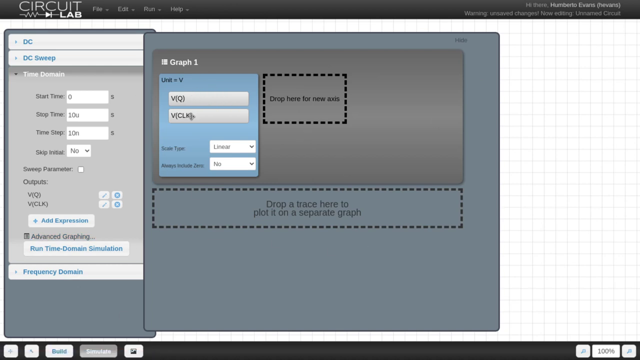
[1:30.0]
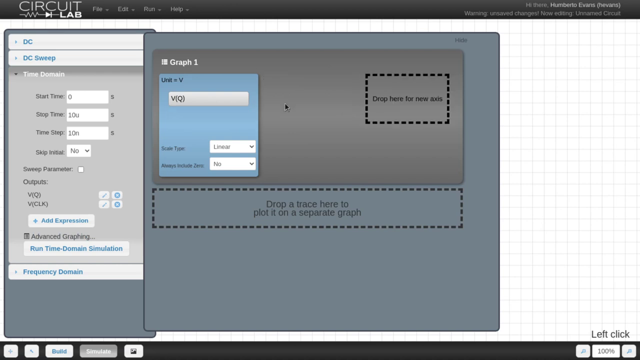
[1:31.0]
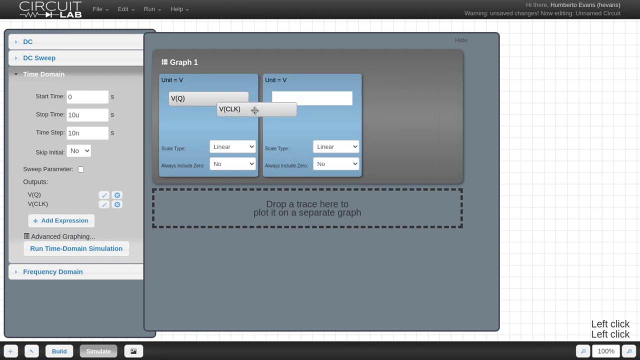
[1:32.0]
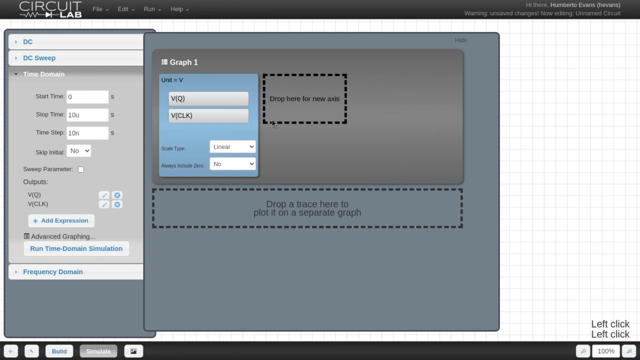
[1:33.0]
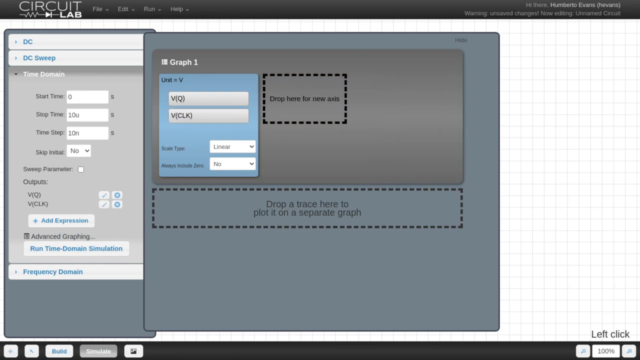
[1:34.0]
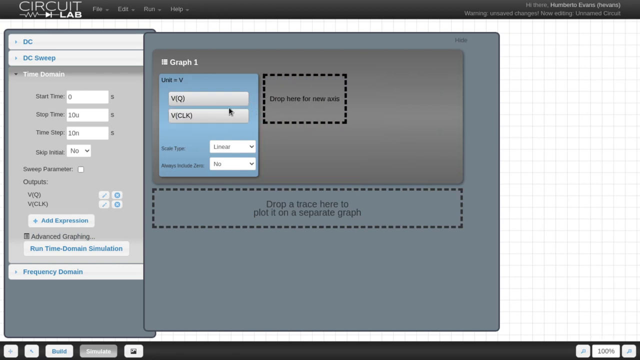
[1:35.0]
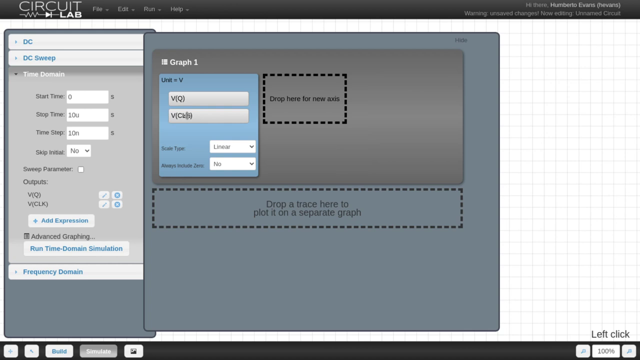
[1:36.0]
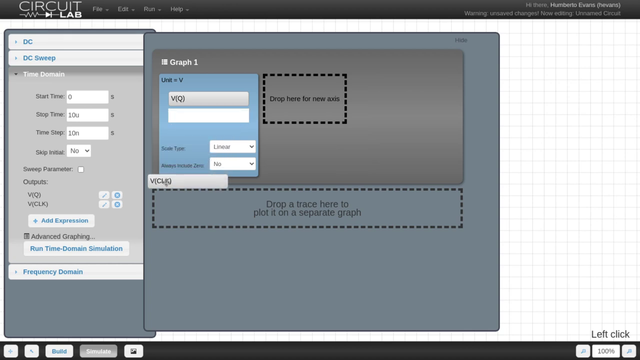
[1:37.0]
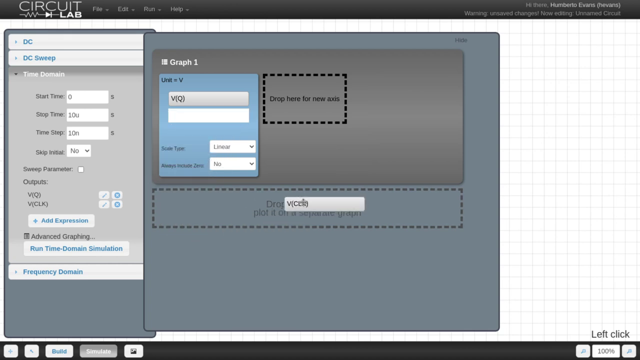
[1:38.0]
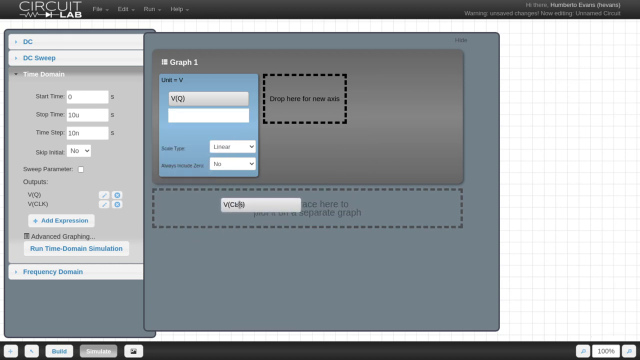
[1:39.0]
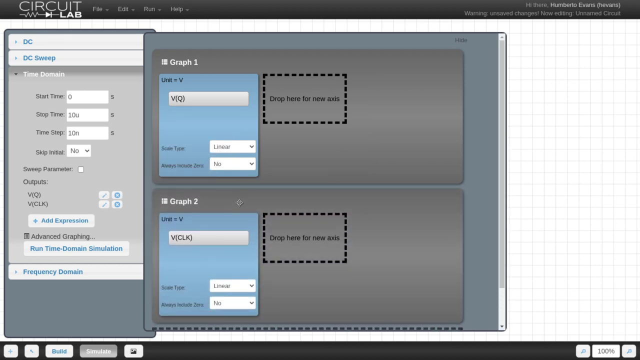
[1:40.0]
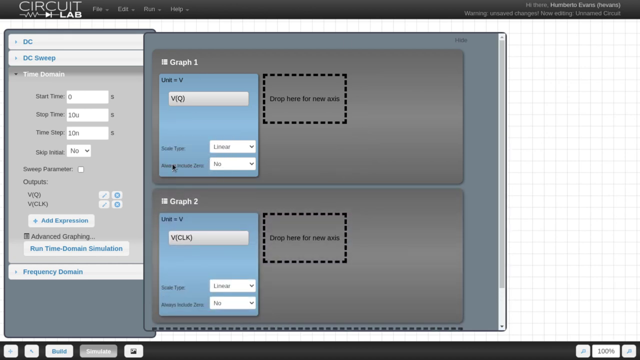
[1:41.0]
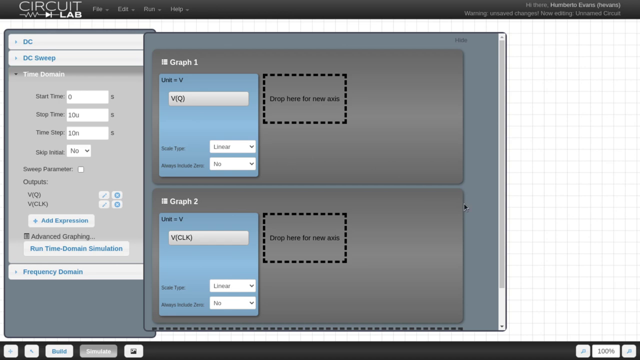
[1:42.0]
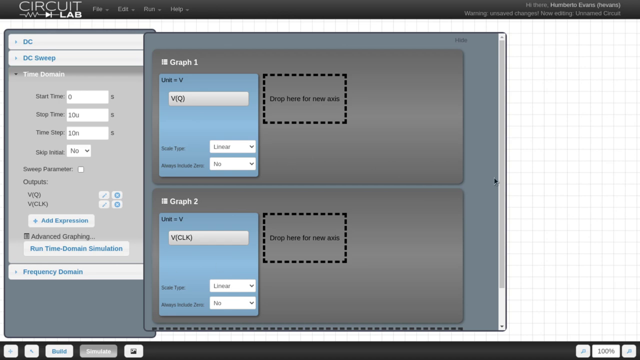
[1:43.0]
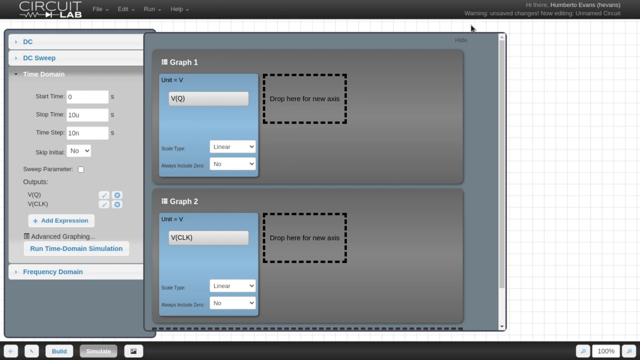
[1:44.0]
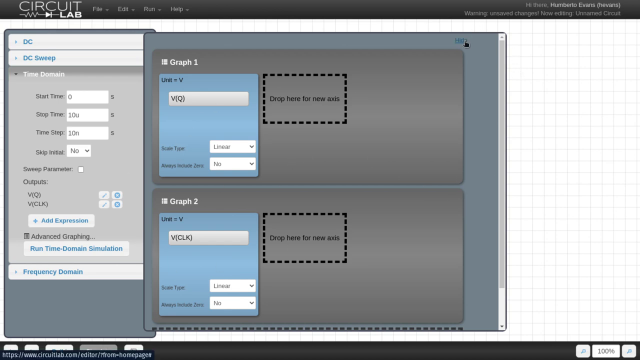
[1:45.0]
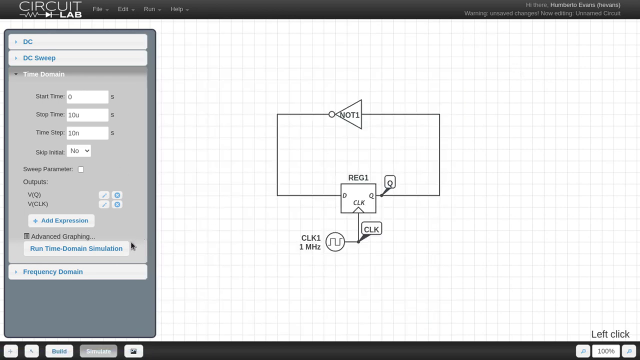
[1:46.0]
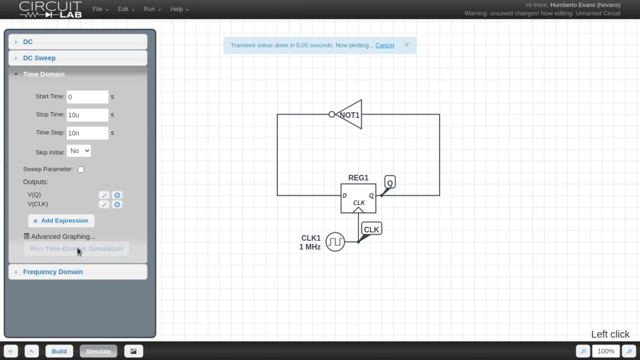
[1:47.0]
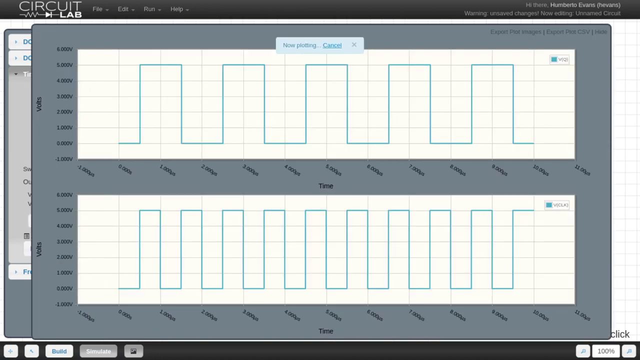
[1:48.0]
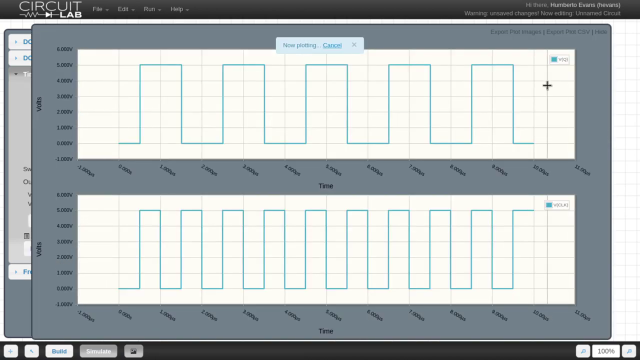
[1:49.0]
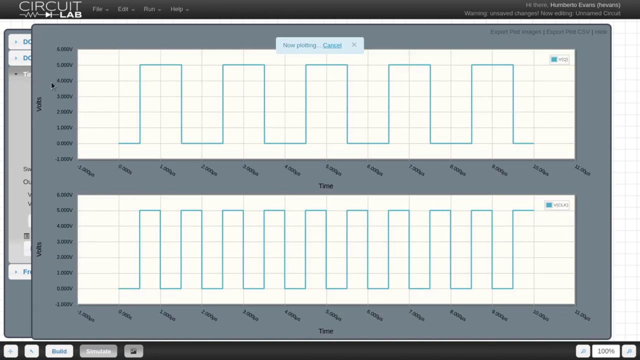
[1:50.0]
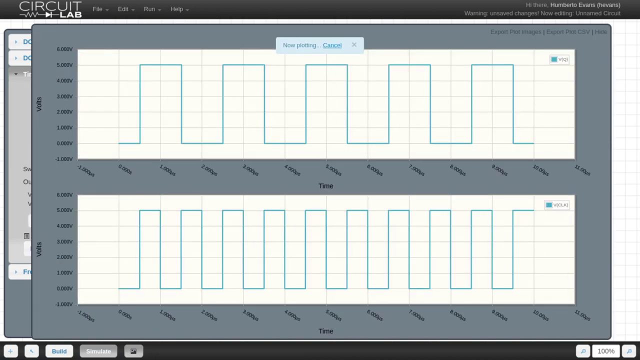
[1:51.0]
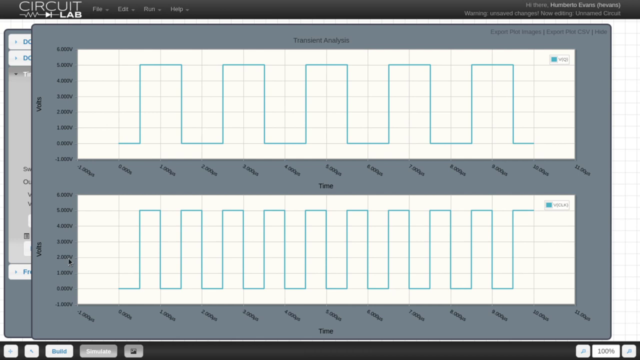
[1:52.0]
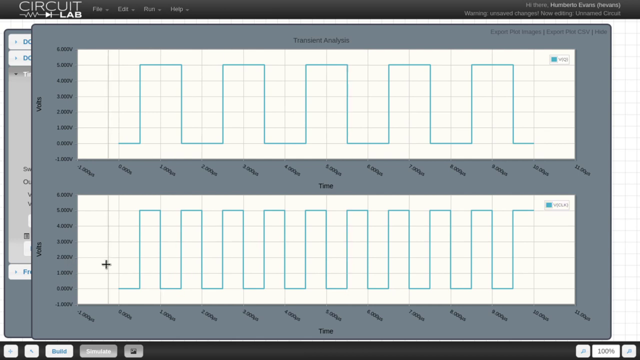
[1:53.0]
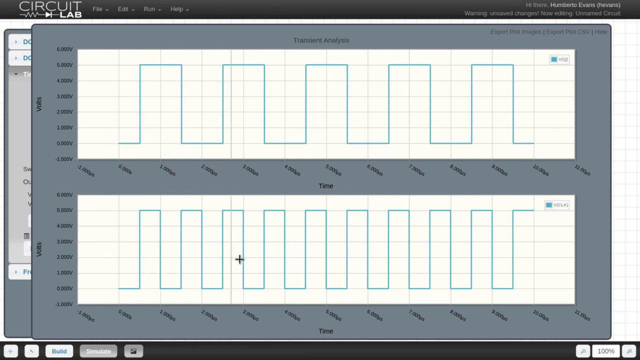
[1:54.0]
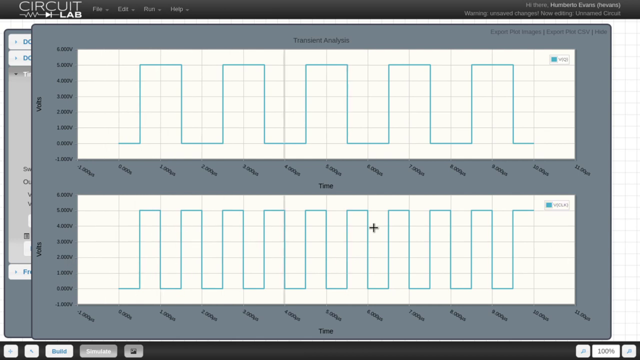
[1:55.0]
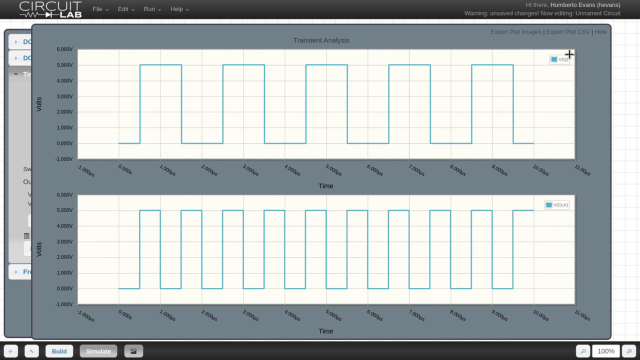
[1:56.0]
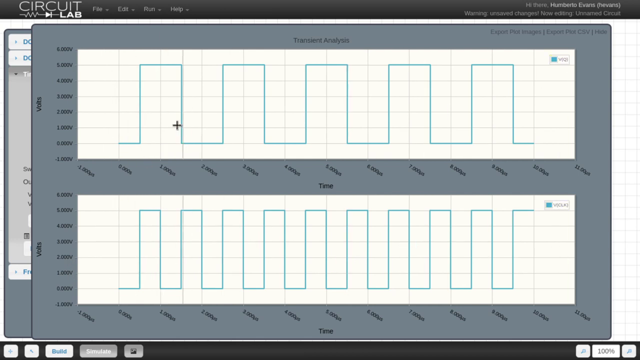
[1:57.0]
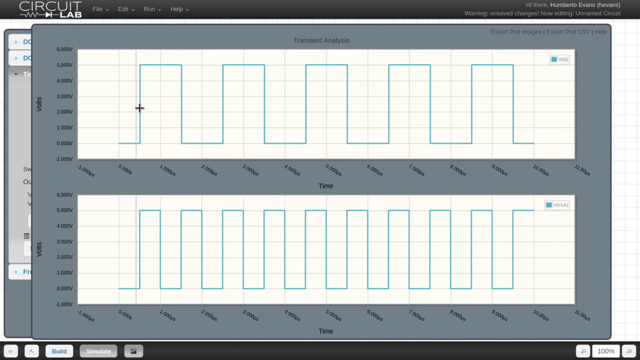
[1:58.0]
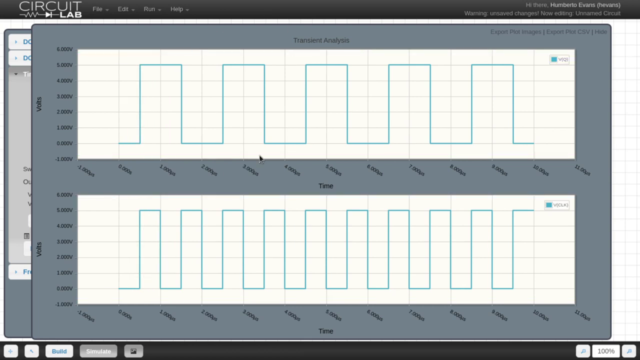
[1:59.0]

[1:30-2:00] In the screen recording of Circuit Lab, a window with a graph tool opens, with options that can be dragged and dropped in the window to create a new axis or a new graphic. The person drags and moves the cursor around the window, then selects the hide button and presses run. A new window immediately appears with two different graphs, one below the other. The cursor moves over the windows showing the graphs and elements like time and volts, and each time the cursor is placed on part of the graphs, information appears.